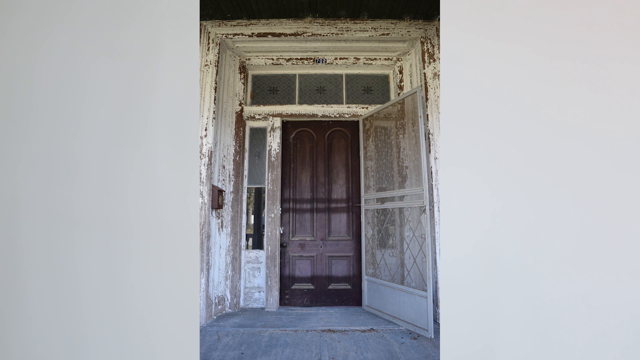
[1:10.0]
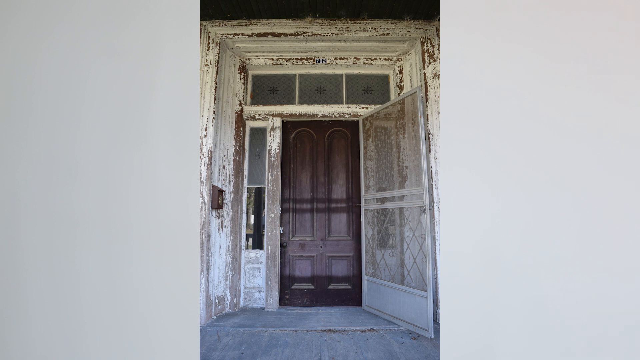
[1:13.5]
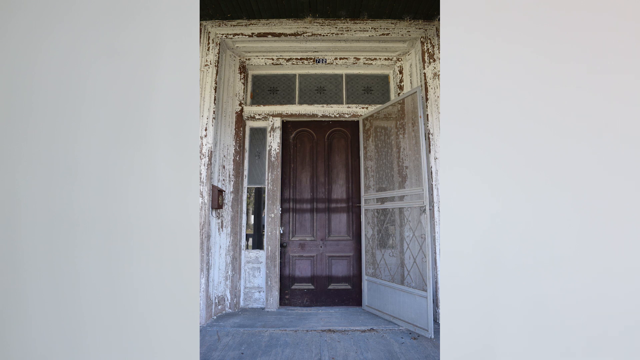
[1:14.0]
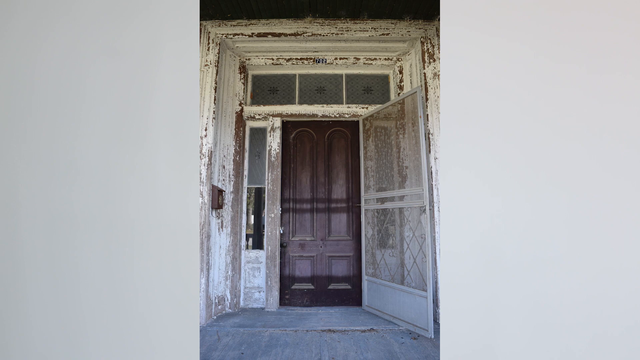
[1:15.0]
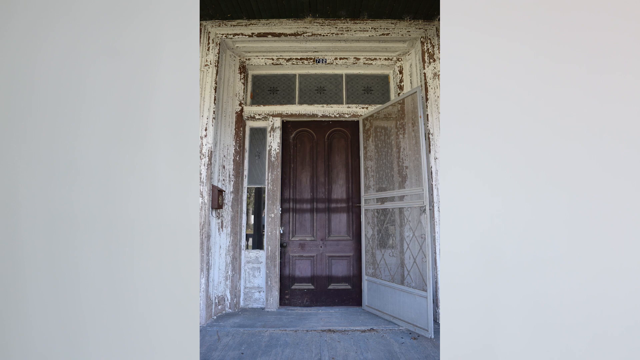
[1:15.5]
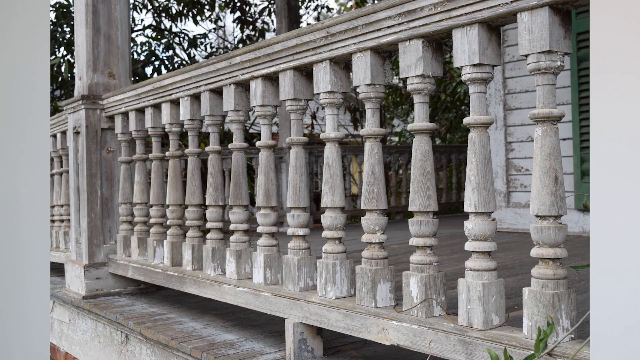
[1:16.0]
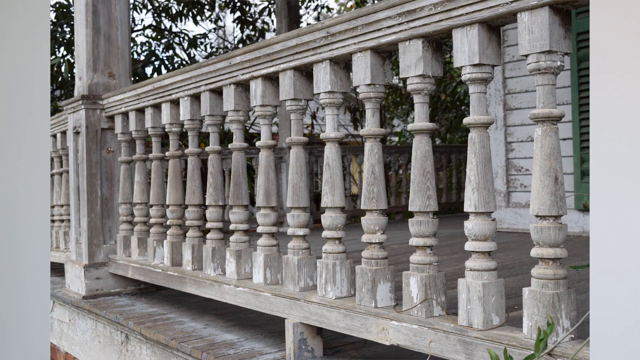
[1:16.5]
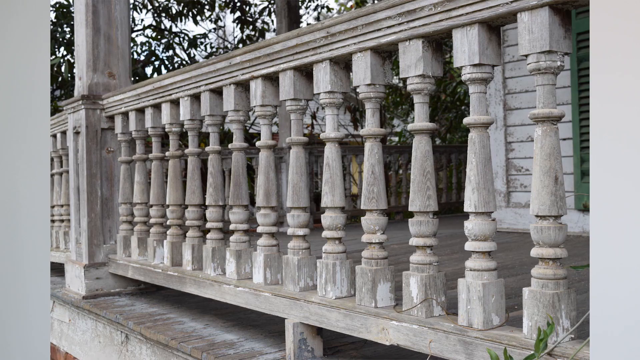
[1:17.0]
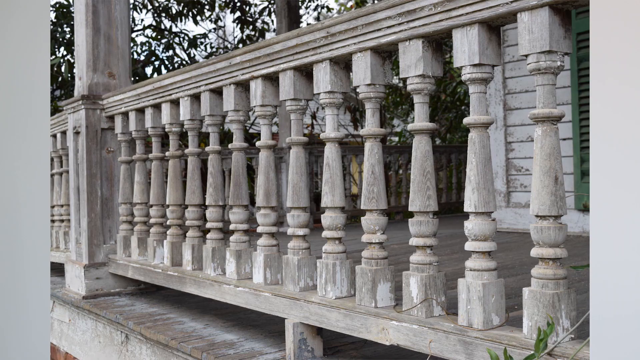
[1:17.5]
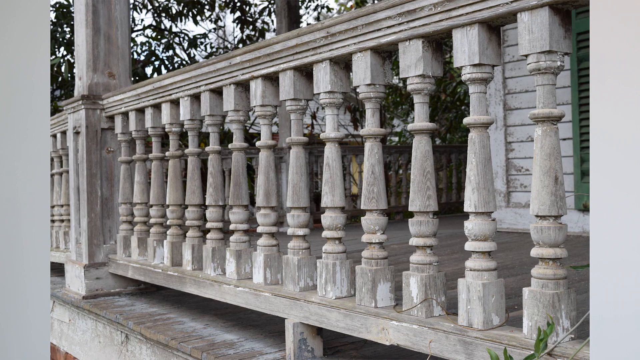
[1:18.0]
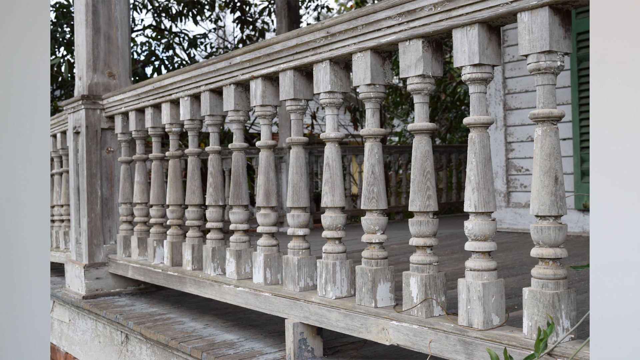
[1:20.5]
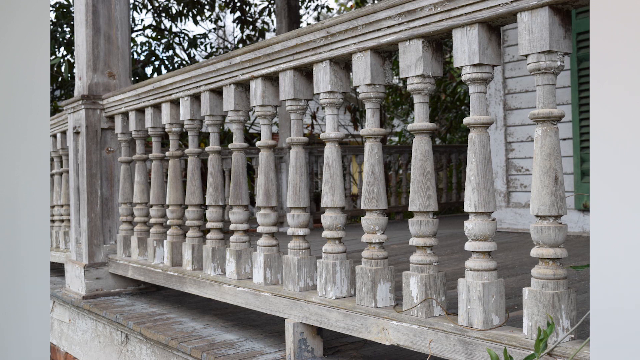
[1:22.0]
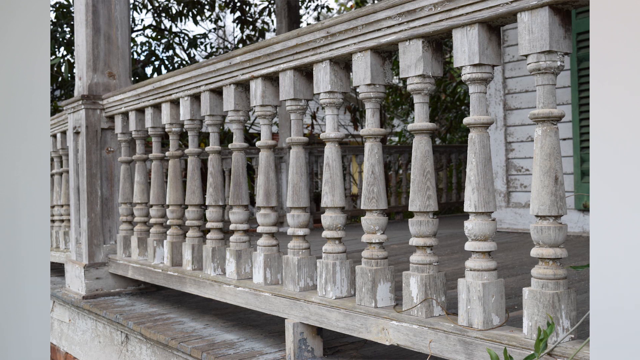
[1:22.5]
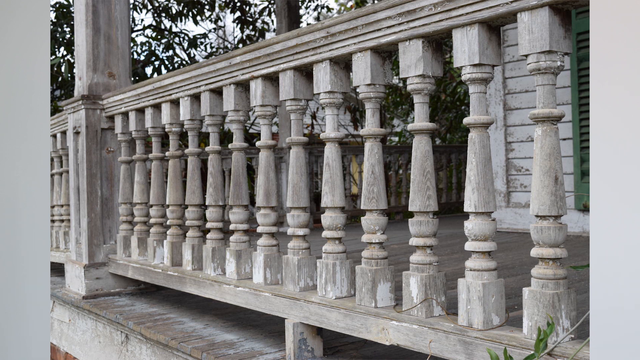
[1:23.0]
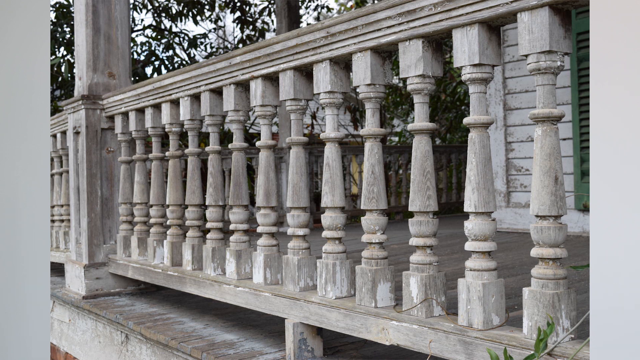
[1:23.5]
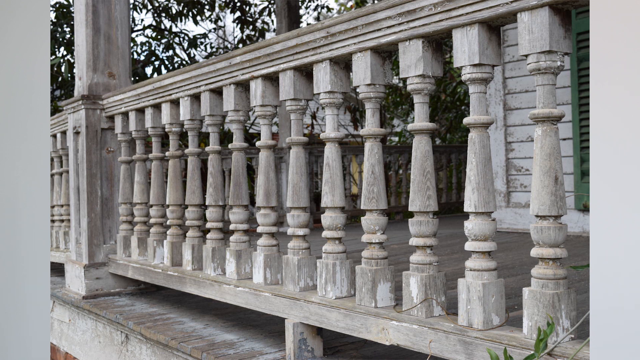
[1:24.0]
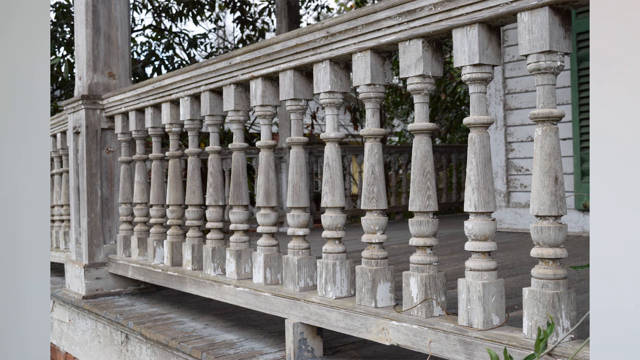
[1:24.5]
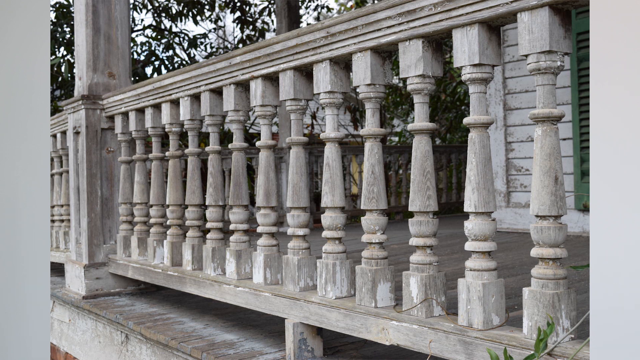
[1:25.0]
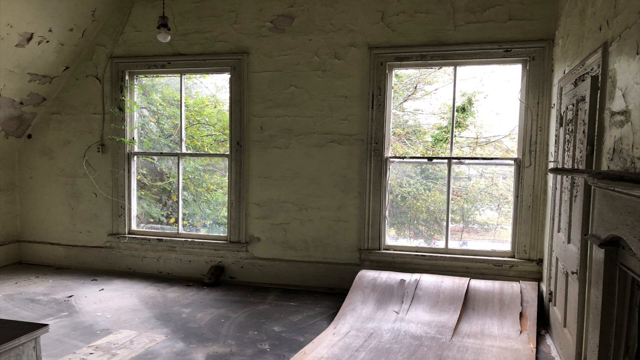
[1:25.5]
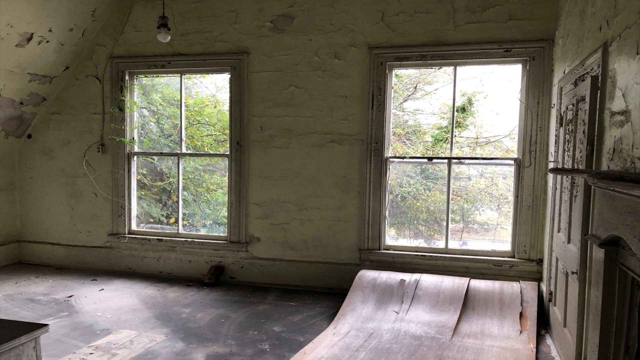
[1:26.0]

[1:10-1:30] A picture shows the front door, a tall brown wooden door that looks to be in pretty good condition. The screen door, which has a white frame, is open. Tall, narrow windows are on the left and right of the door, and three larger square windows are above it. The white frame around the door is in very bad condition, with a lot of the paint chipped off to reveal the brown underneath. Next is an image of the railing that lines the front porch, which looks to be made of wood and has a carved design on the rungs: a square on top, a few circular rings, a cylinder shape, another circular ring, a cylinder that flares out at the bottom, then a narrower neck, widening into a half-circle shape, a few disc shapes beneath, all on a square block. It is a fancy-looking gray railing. Then an image shows what looks like the attic, with two large four-panel windows through which a white sky and trees are visible. The attic does not seem finished: the floor looks like a dark dusty material and the wall paint is peeling in large chunks. There is one hanging light bulb, and what look like a few sheets of some brown flat material lie on the floor.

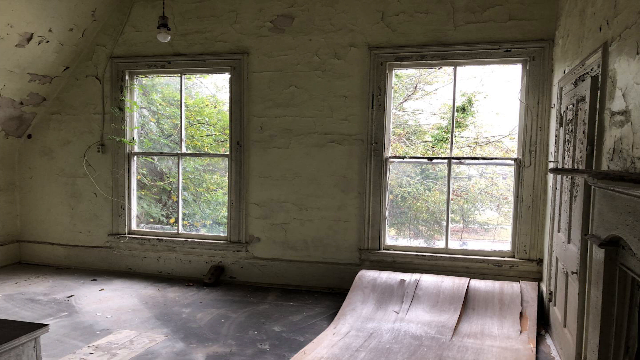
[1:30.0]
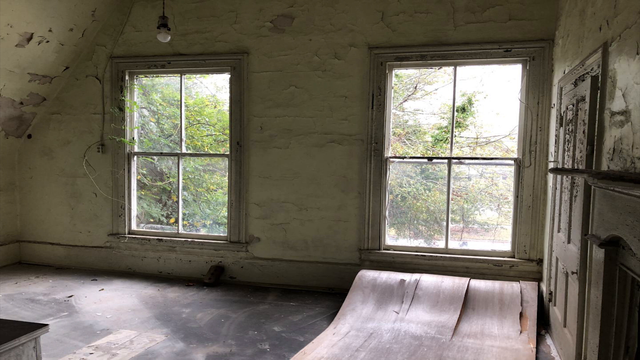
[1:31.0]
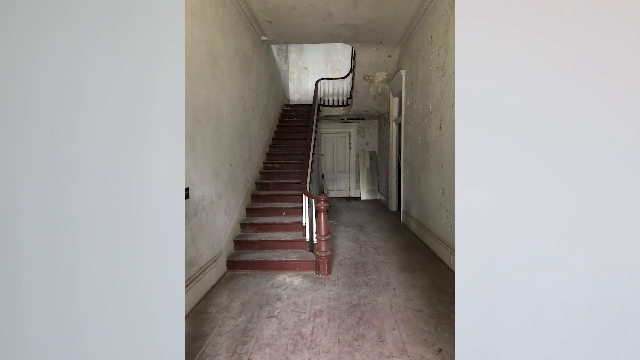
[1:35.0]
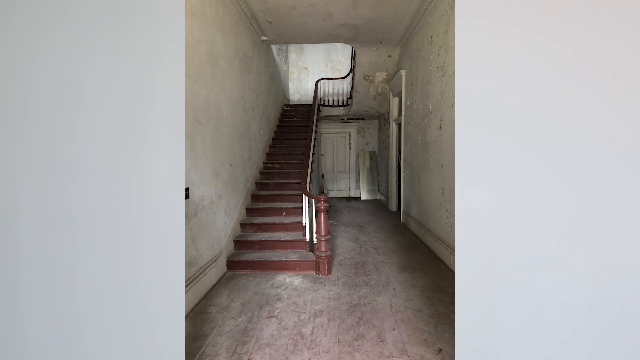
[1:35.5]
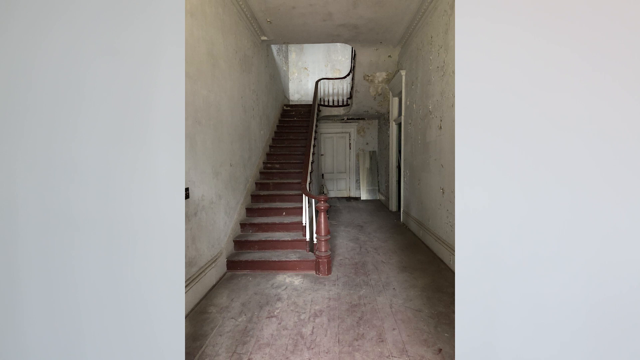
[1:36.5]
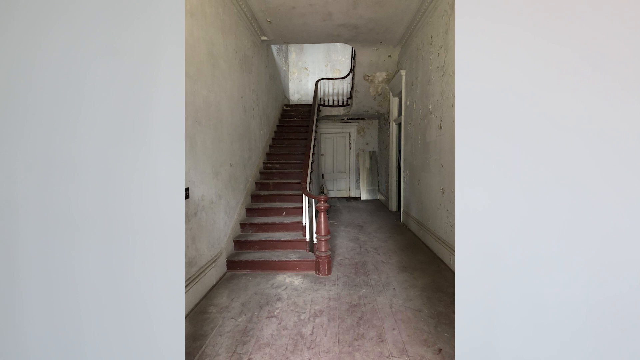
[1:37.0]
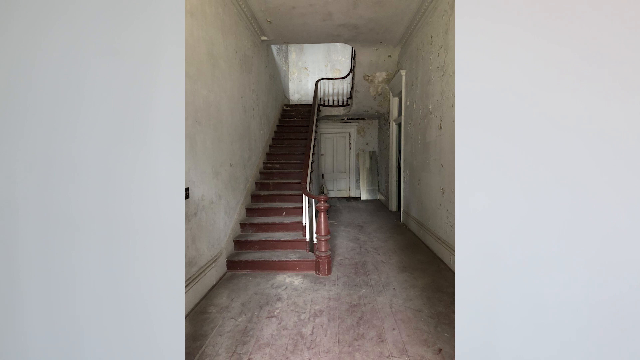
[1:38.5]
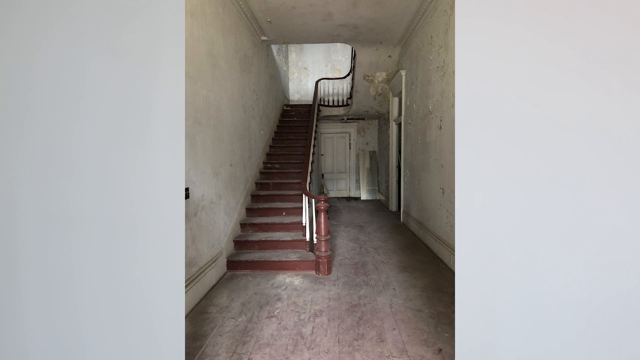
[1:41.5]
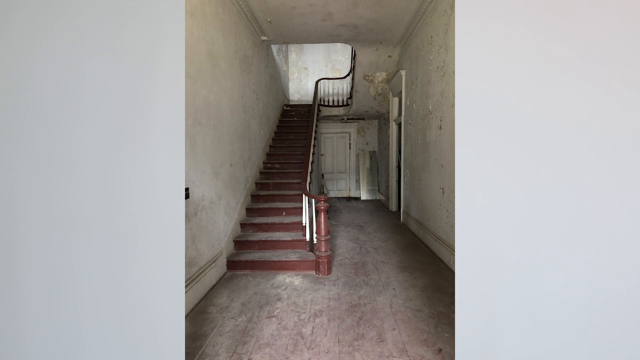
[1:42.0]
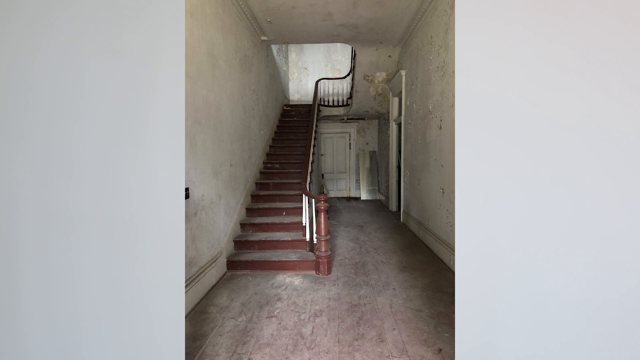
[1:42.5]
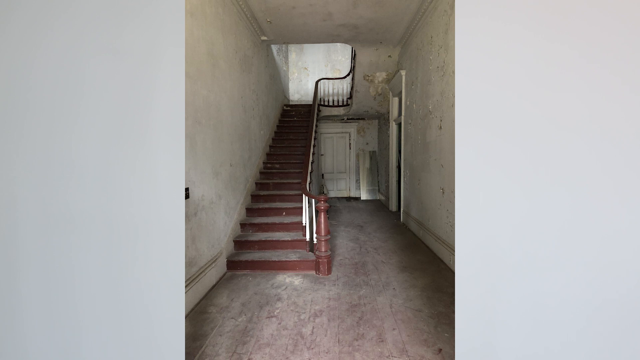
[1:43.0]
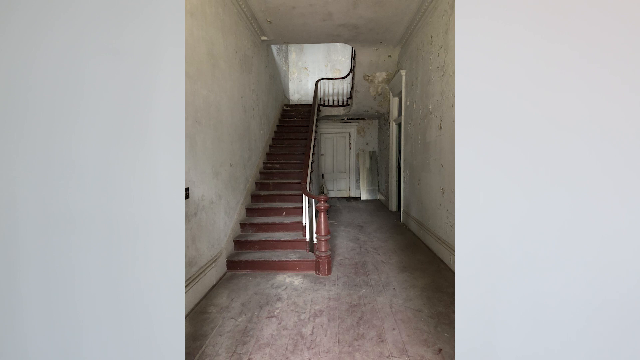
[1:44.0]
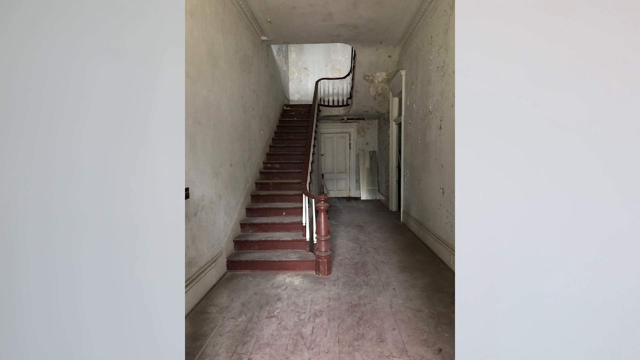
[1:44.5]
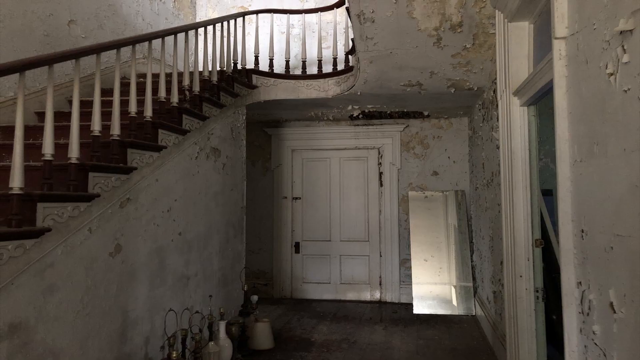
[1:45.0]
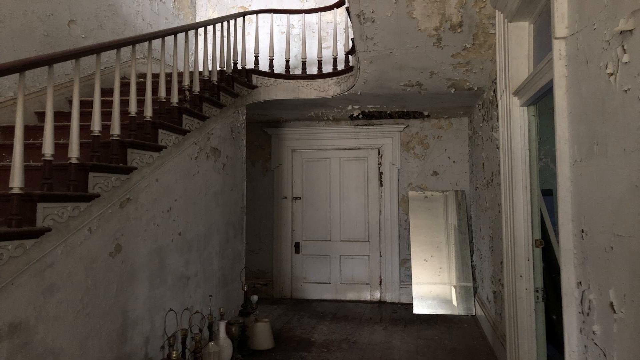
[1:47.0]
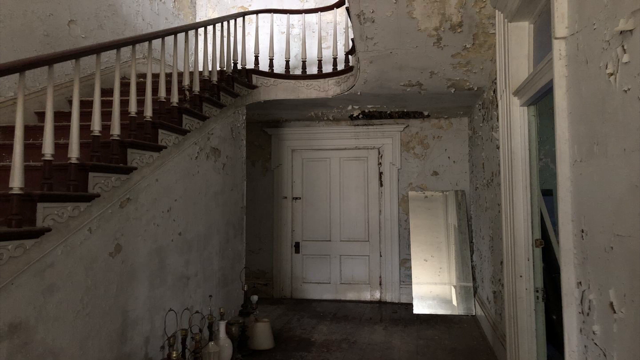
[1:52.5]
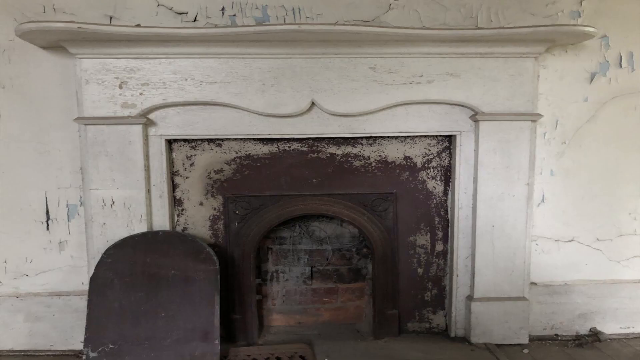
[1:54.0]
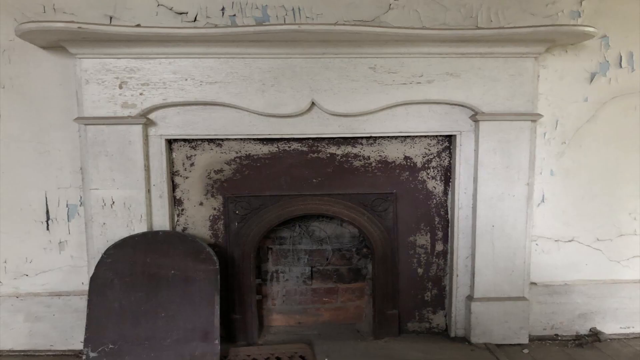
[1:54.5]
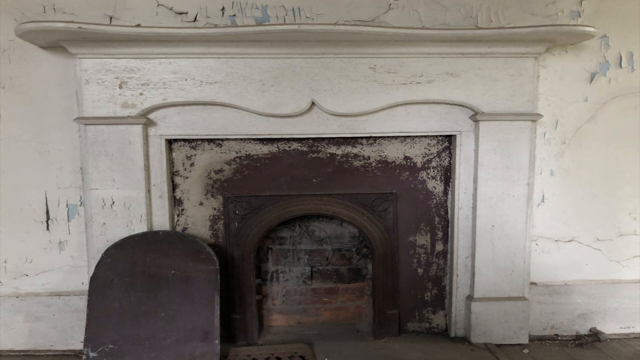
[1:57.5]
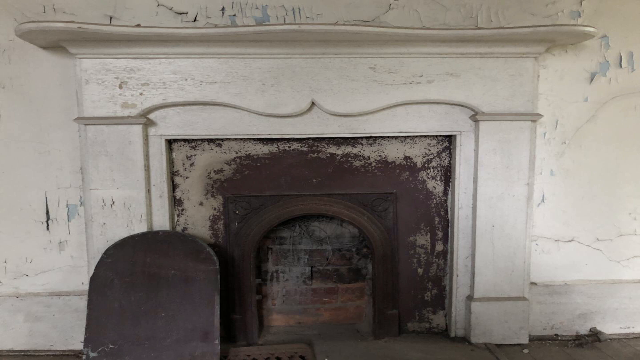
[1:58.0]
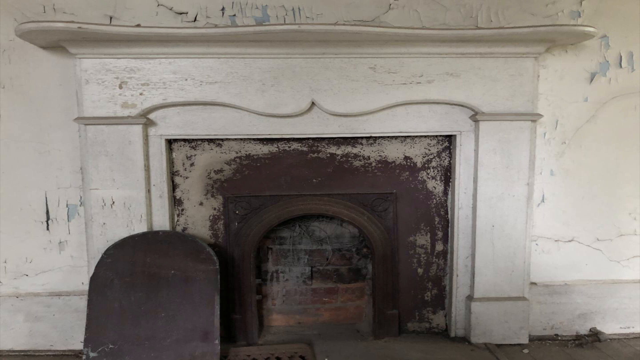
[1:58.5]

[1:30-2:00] A photo shows what looks like an unfinished attic. There are two large windows on the wall, the floor looks dusty and brown, and the wallpaper looks light yellow and is peeling in large chunks. A single light bulb hangs from the ceiling, and a few sheets of large flat brown material lie on the floor on the right side of the room. Green leaves and tree branches are visible out the windows; one of the panels of the left window looks like it may be broken out, as some leaves and branches appear to poke in through it. Next is an image of a part of the house that looks like a foyer. On the left, a large brown straight staircase goes to the second floor. To the right is a narrow hallway with a room on the right side with an open door and a room straight ahead with a closed white door, and a tall rectangular mirror leans against the wall. A closer image shows the stairway, the hallway with the two rooms, and the mirror. Light gray wallpaper appears to be peeling, and the white frames around the doors have some peeling paint as well. There seems to be a row of lamps lined up on the left wall by the staircase, with their lampshades taken off and resting next to them. Then an image shows a fireplace with a white wall, framing and mantle. A curvy design is carved into the lower part of the mantle over the fireplace. The brown framing of the fireplace looks like its paint or color has scratched off a lot, so a tan color pokes through, and a brick wall appears to be built almost right at the opening of the fireplace. What seems to be a large brown slab in the shape of the fireplace, apparently the cover, is placed to the left side, leaning against the fireplace.